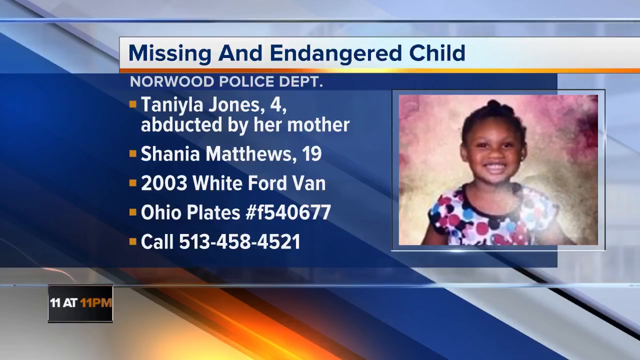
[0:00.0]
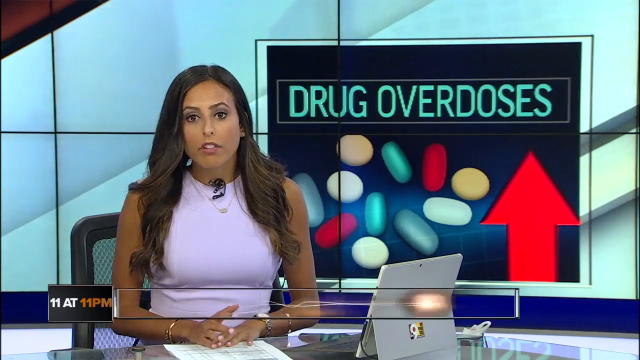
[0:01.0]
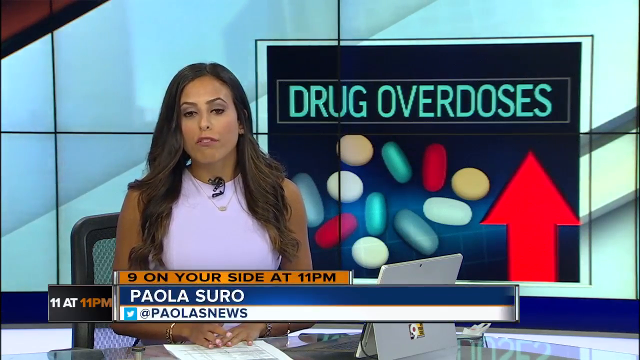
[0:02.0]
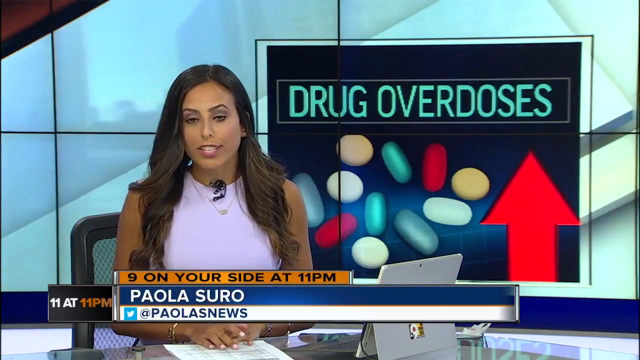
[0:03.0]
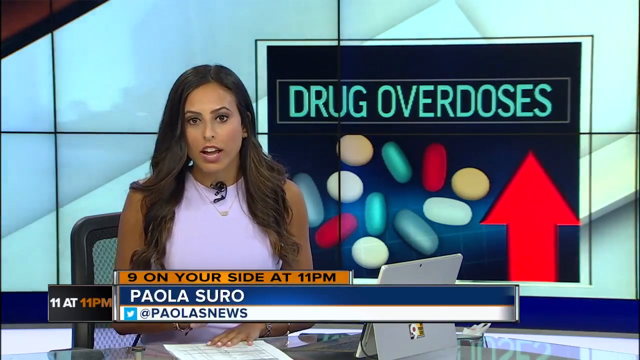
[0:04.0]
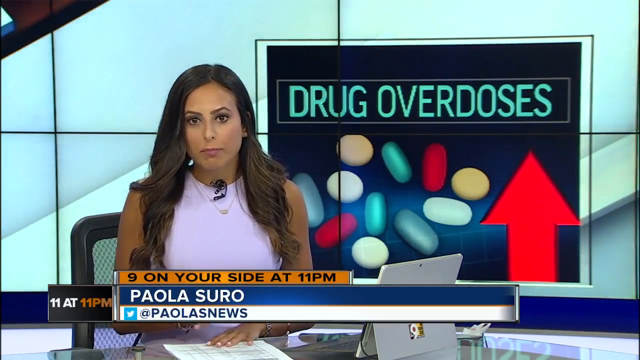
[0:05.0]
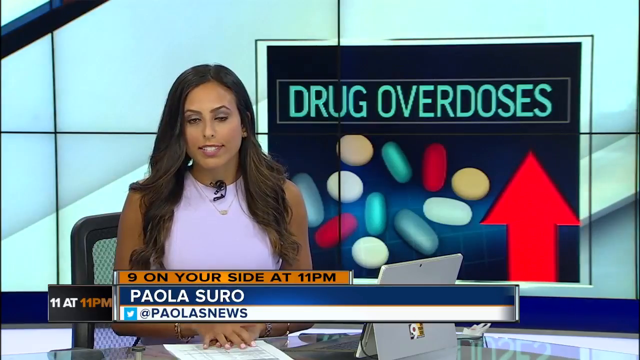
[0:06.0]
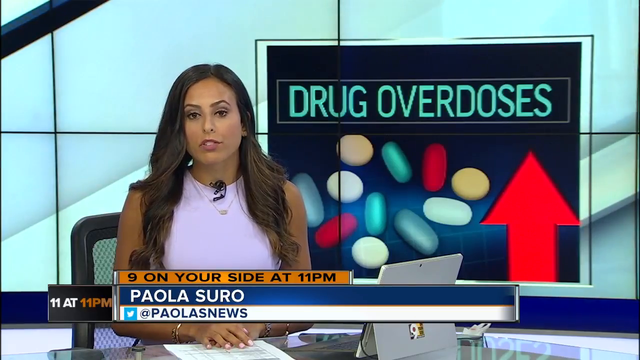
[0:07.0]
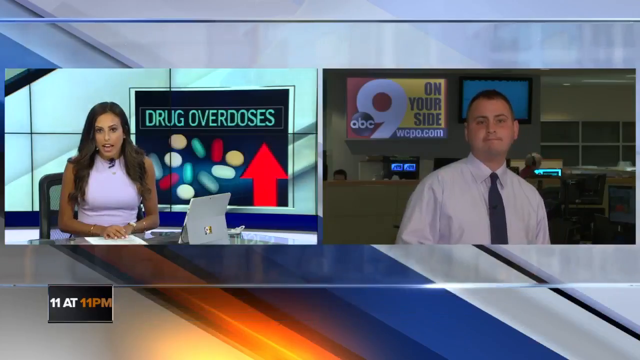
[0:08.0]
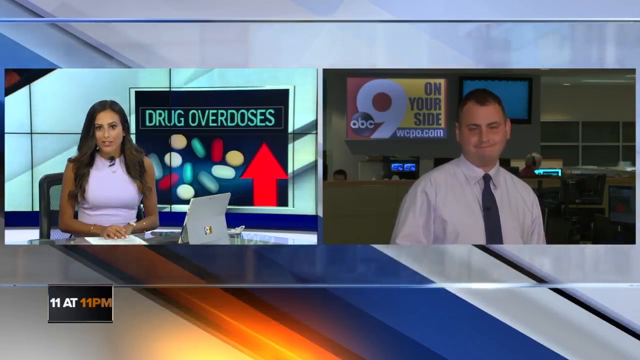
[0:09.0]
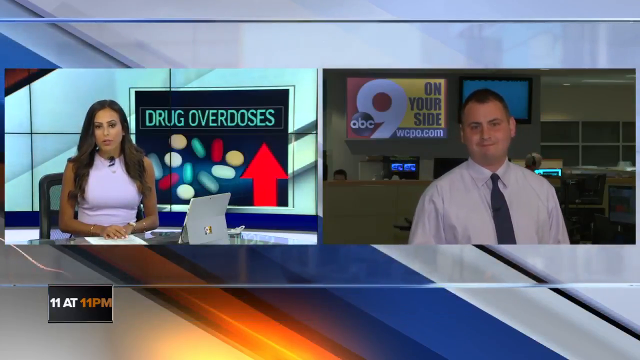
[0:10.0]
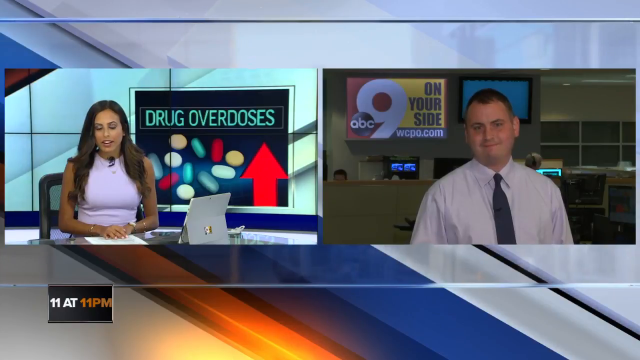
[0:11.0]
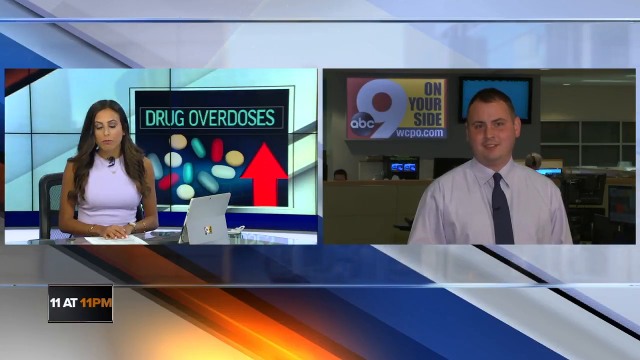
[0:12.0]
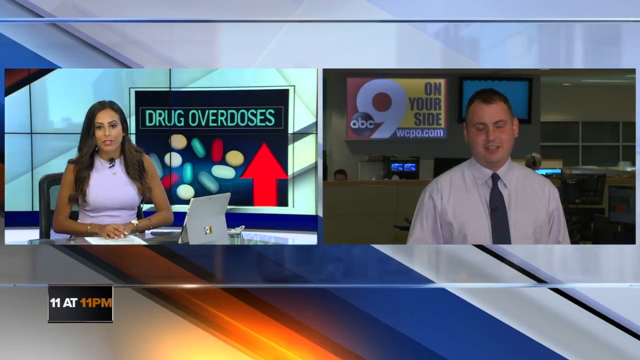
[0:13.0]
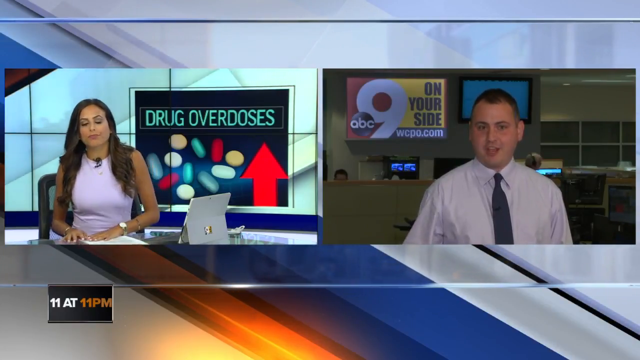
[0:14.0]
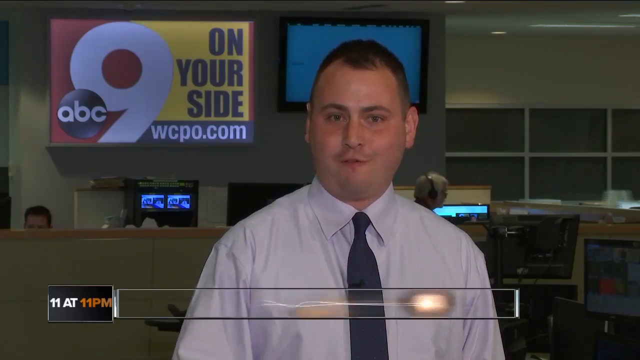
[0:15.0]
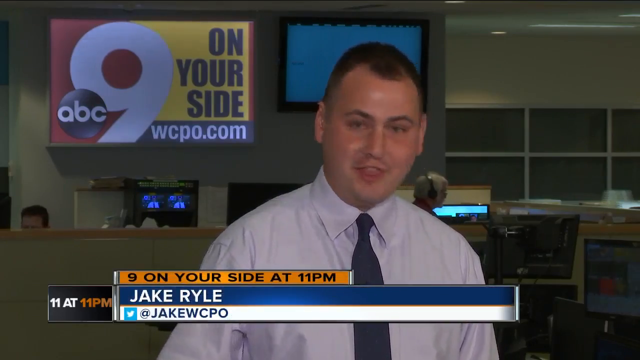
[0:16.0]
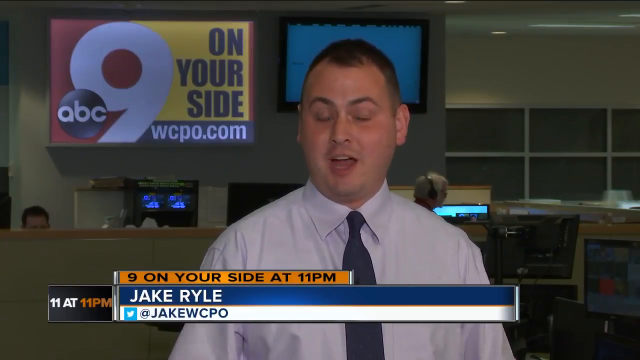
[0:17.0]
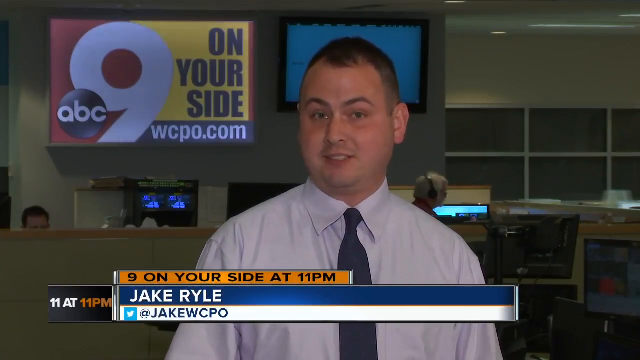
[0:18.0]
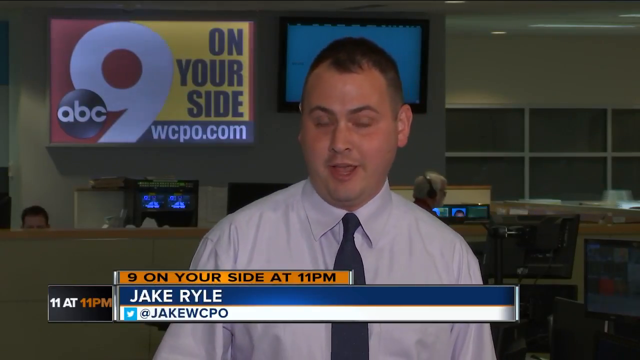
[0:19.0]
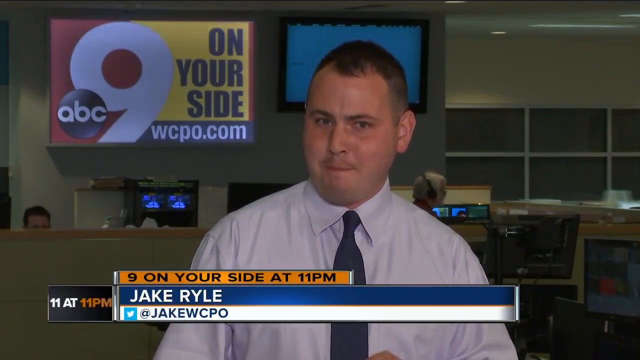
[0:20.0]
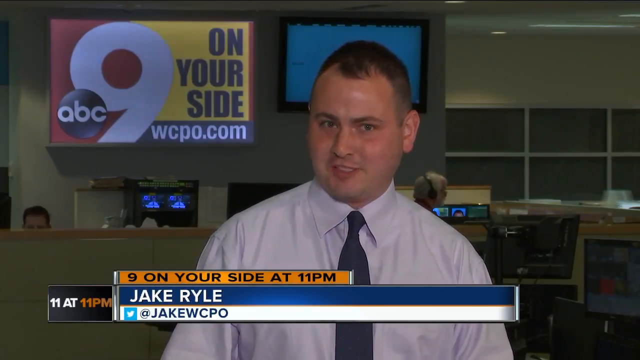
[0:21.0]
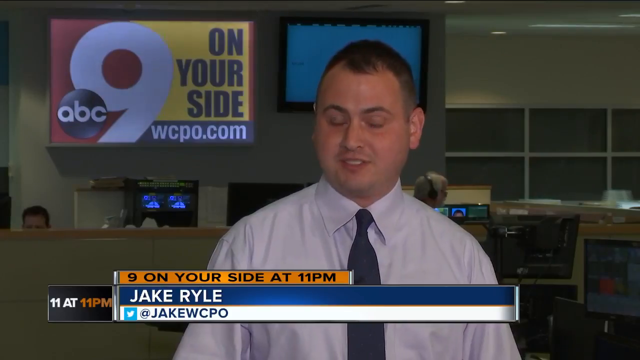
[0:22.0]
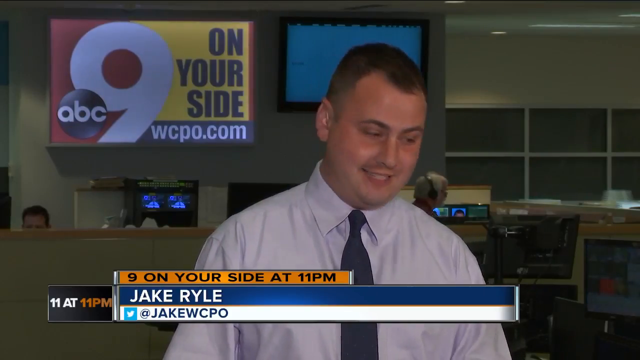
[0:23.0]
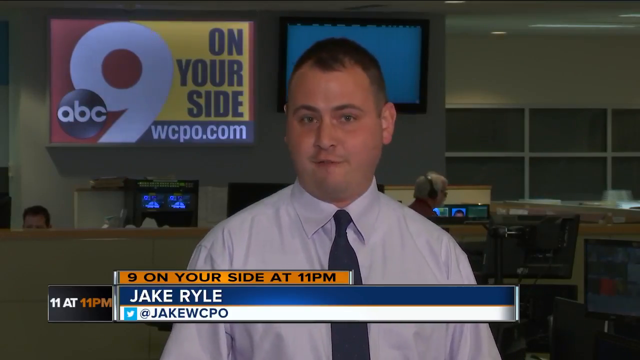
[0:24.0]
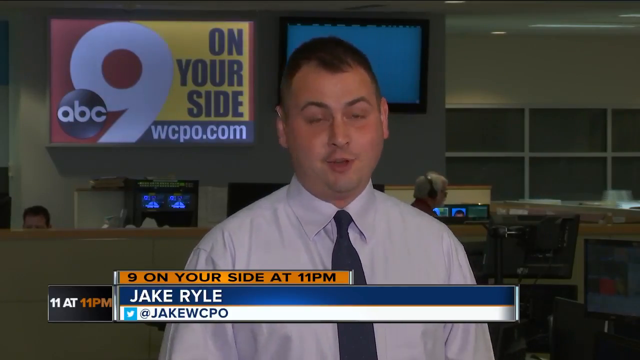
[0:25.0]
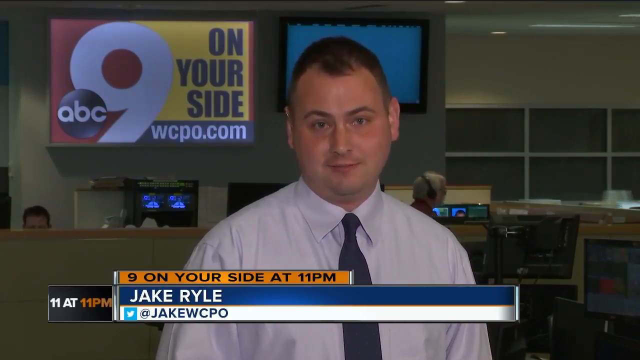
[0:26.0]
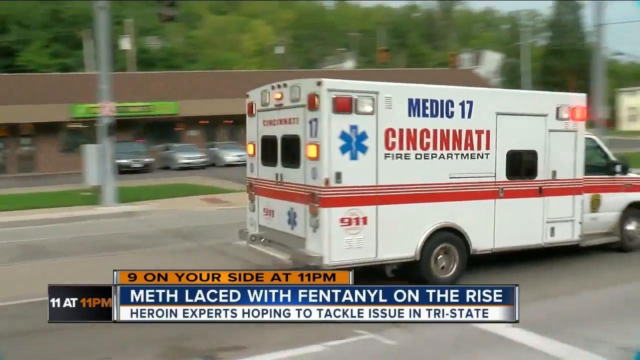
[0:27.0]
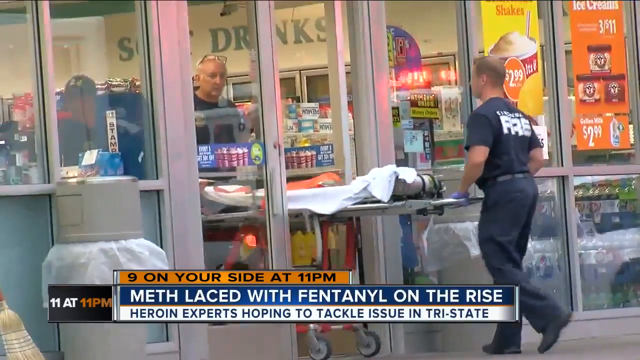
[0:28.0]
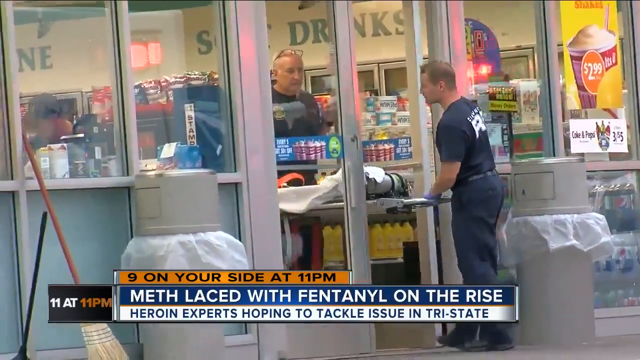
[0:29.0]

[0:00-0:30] The video opens on a news broadcast screen with a blue and white striped graphic background. A white banner with blue writing carries the headline "missing and endangered child", and beneath it is "Norwood Police Department". A series of bullet points reads "Taneela Jones, 4, abducted by her mother", "Sir Shania Matthews, 19", "2003 Whiteboard Van", "Ohio Plate number F540677" and "call 513-458-4521". To the right of the bullet points is a photograph of a black child who looks to be about 4, posed against a professional photographer's background. She is smiling, her hair is tied back, and she wears a round-neck, short-sleeved white dress with a blue, pink and black design. In the bottom left corner, the program name appears in a small black square: "11 at" in white letters and "11pm" in orange letters.